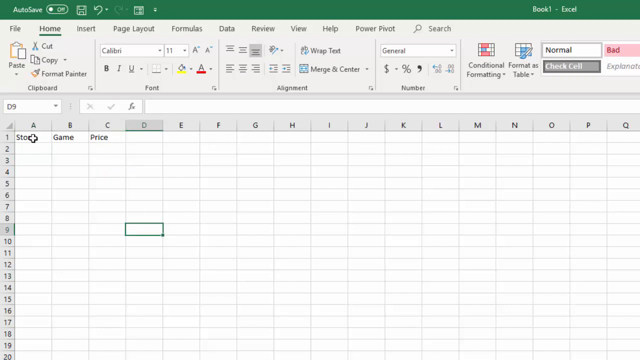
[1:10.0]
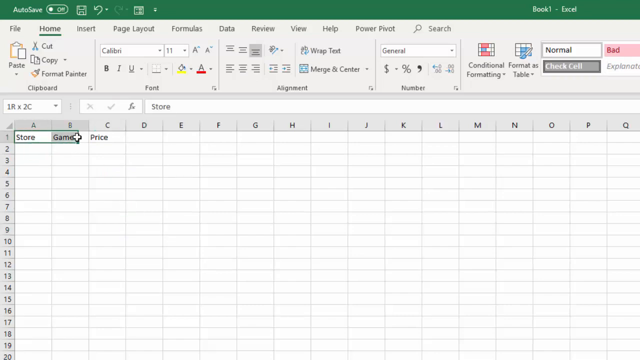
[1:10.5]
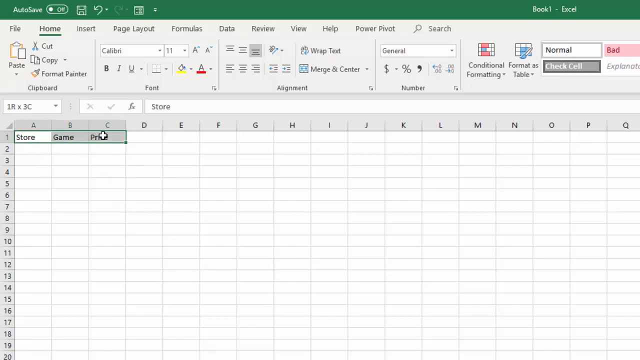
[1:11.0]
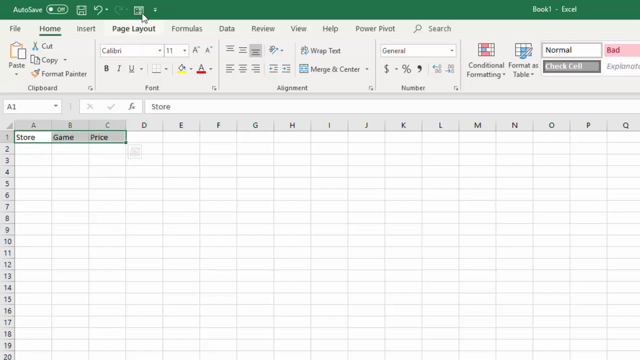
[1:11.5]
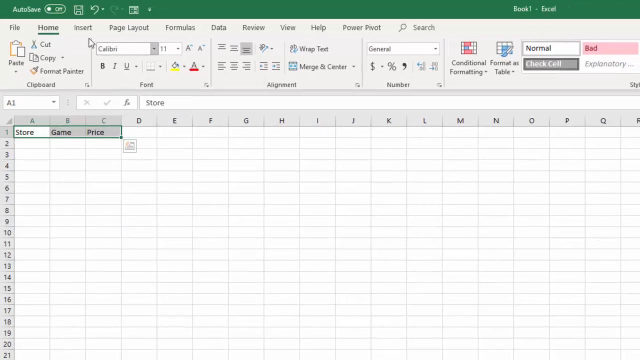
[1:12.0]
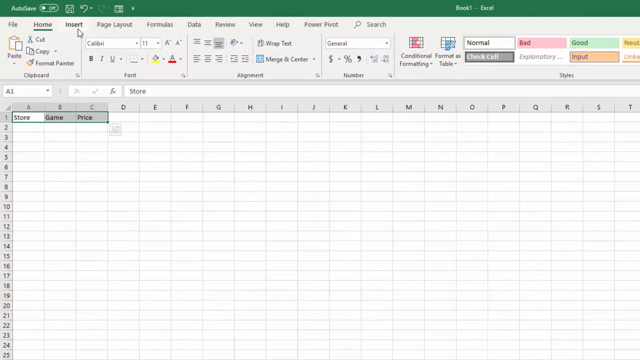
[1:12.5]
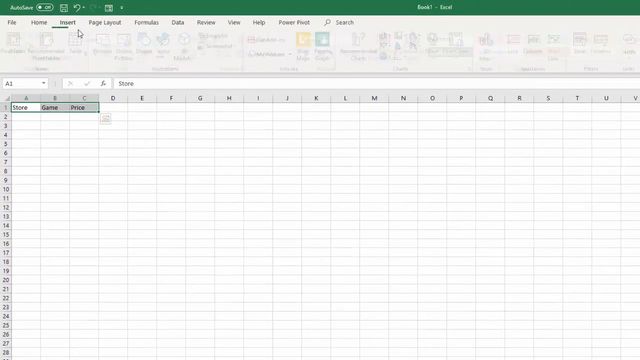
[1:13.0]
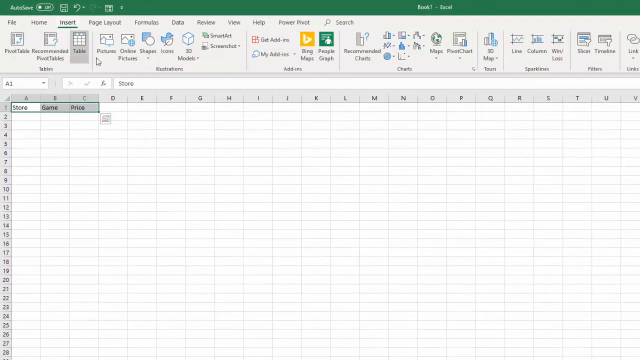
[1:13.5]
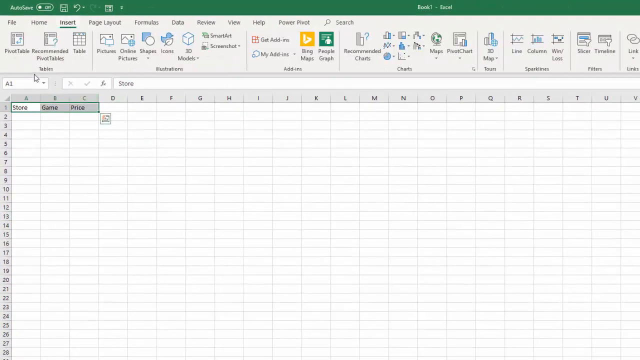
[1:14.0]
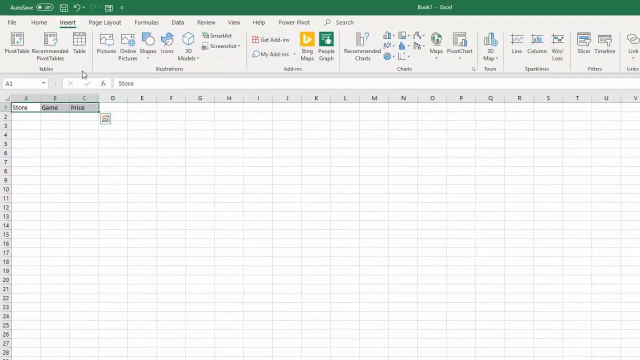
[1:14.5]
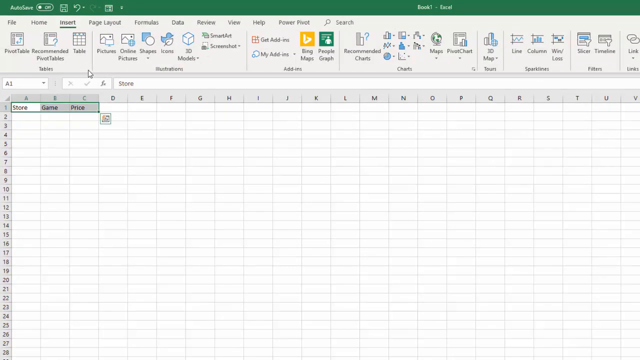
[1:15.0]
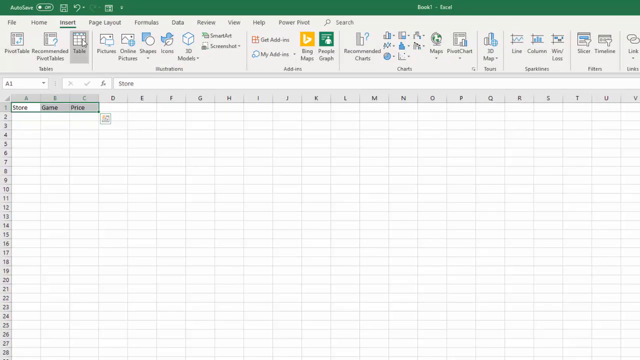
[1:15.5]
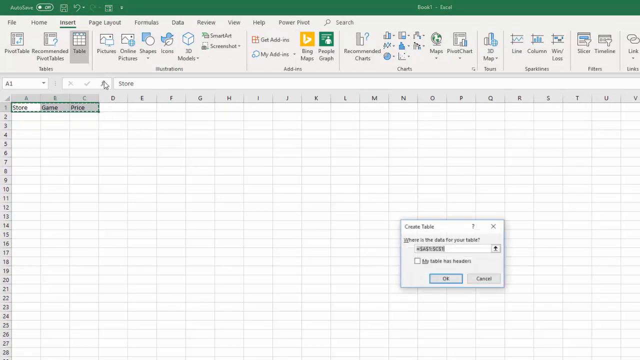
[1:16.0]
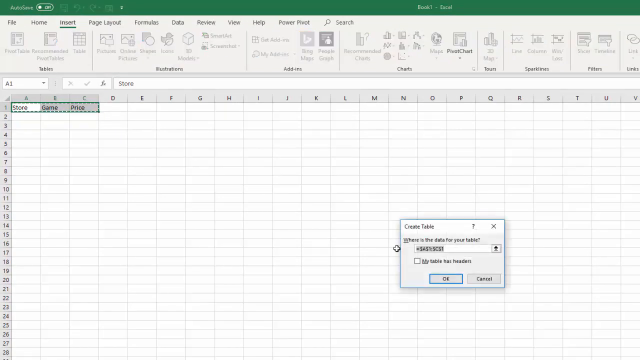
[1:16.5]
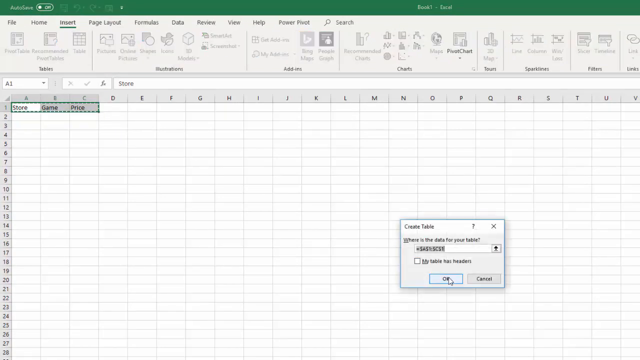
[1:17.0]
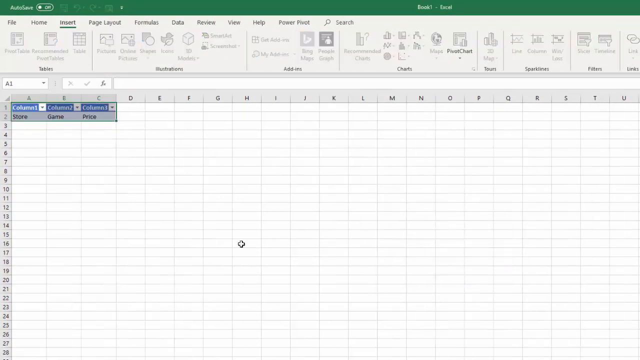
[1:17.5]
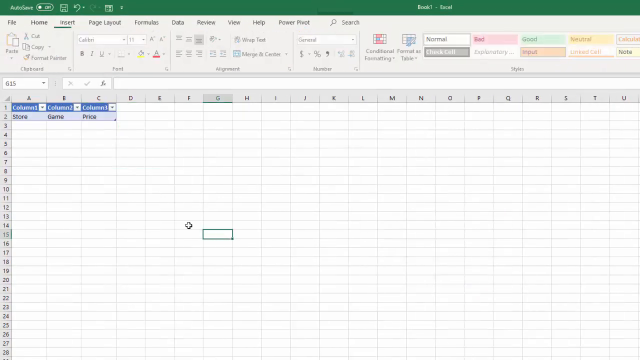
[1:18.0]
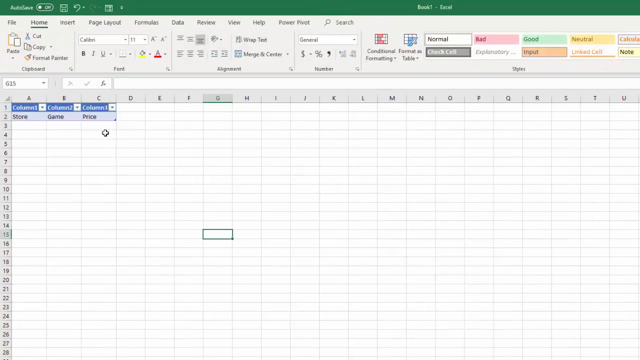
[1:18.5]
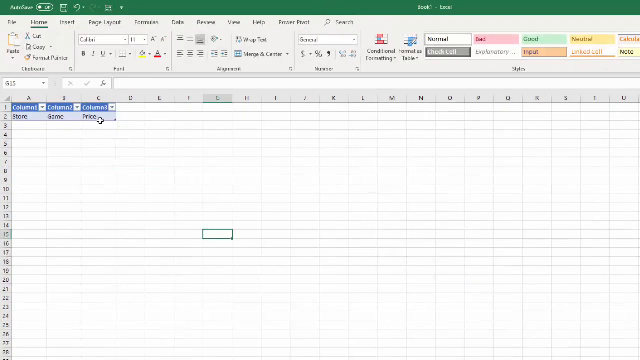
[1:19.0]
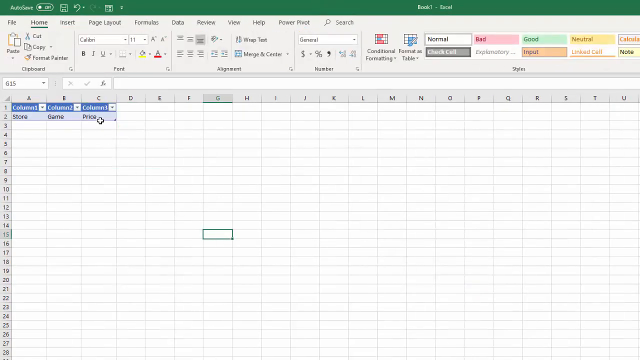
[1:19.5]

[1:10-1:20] The user works with cells A1 through C1, where they seem to have typed "store" in A1, "game" in B1 and "price" in C1. They highlight all three, go to the Insert tab and click Table. A window titled "create table" appears, asking "where is the data for your table" and showing A1 through C1. They click OK, and a table is created with store, game and price as the column labels. Something like a button is created above them, A1 through C1 each get a column dropdown menu, and the store, game and price text sits at B2 through C2.